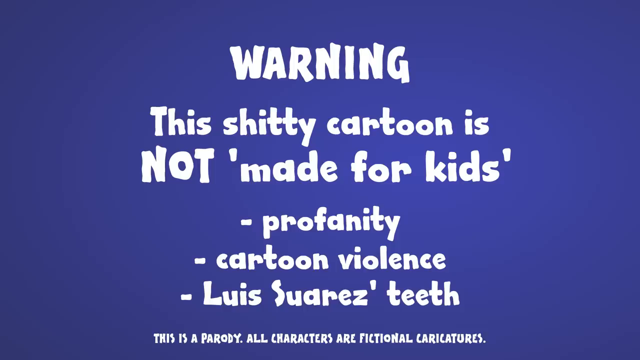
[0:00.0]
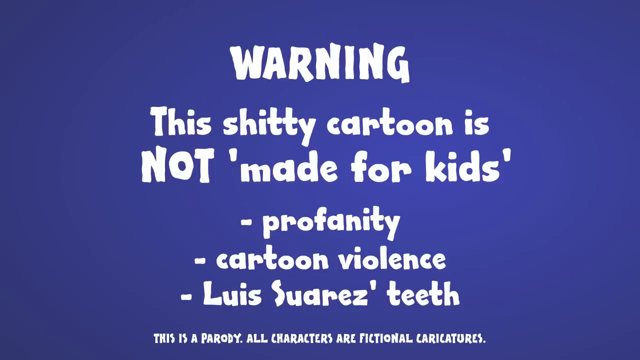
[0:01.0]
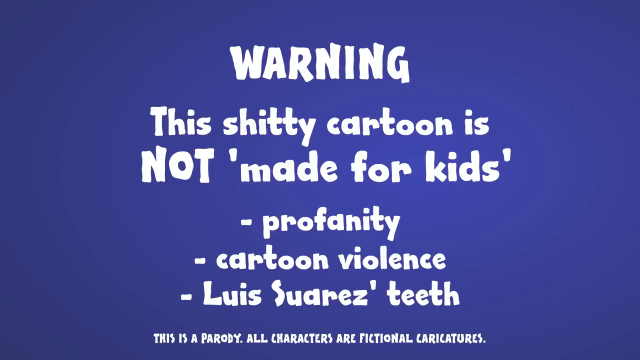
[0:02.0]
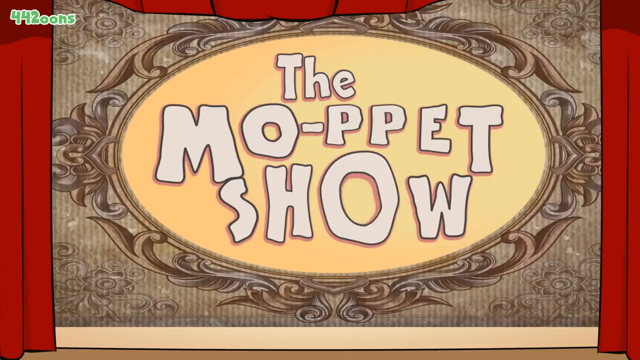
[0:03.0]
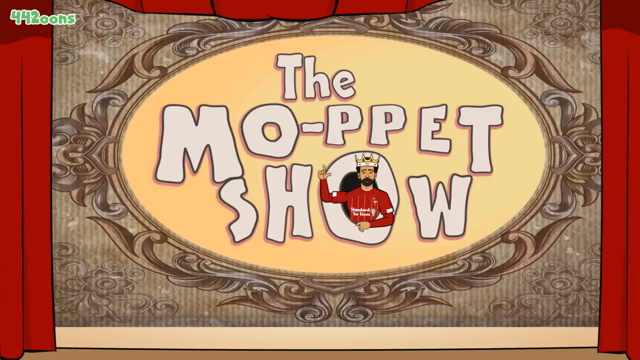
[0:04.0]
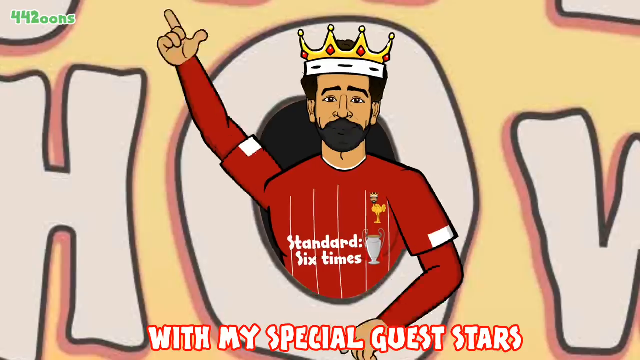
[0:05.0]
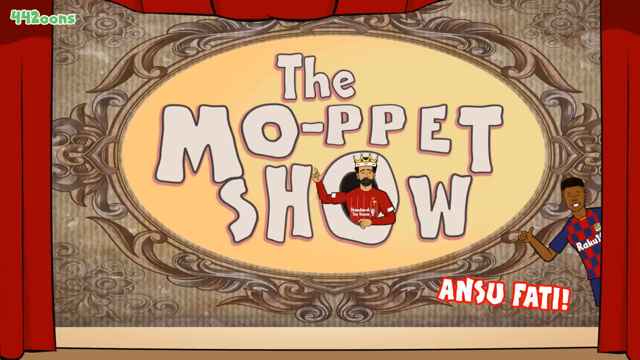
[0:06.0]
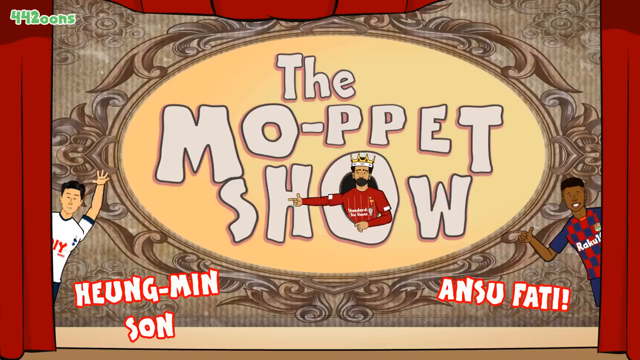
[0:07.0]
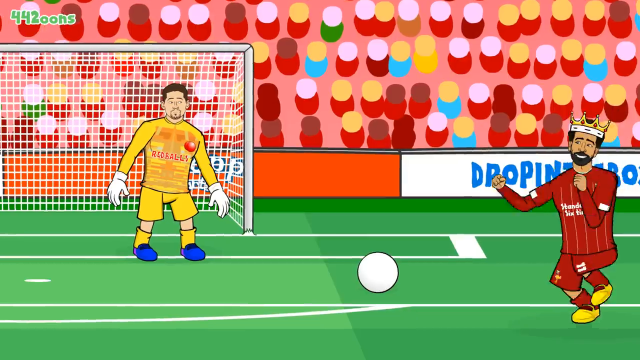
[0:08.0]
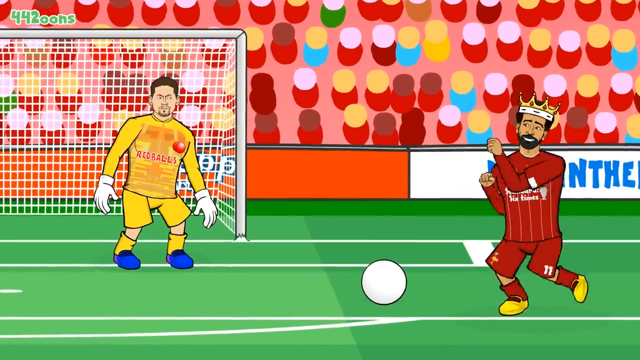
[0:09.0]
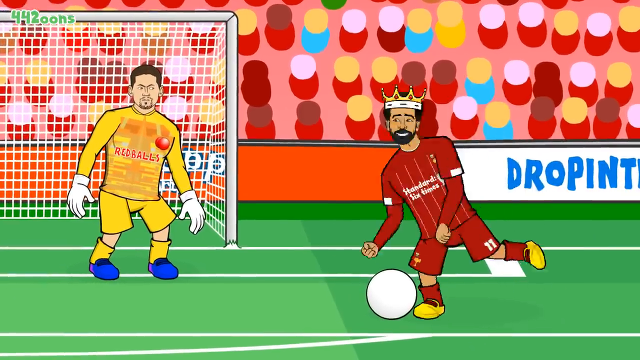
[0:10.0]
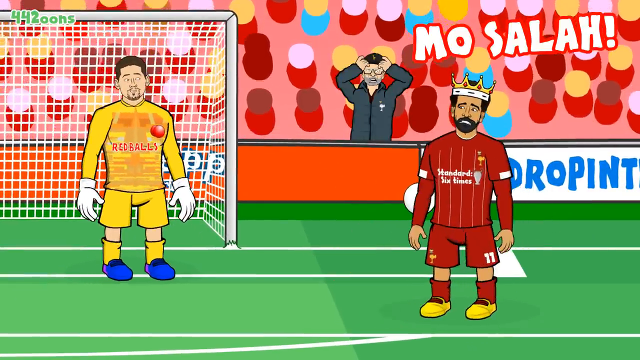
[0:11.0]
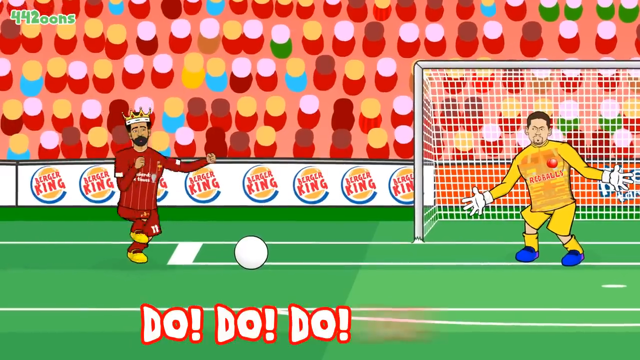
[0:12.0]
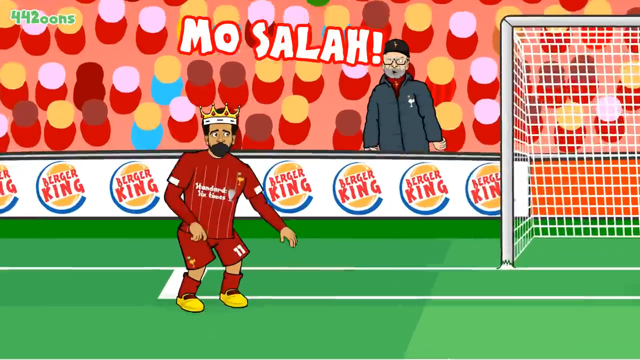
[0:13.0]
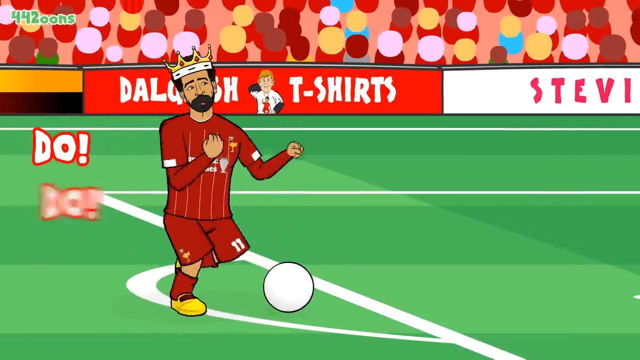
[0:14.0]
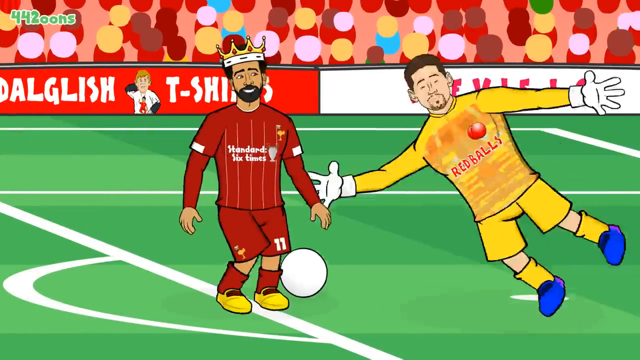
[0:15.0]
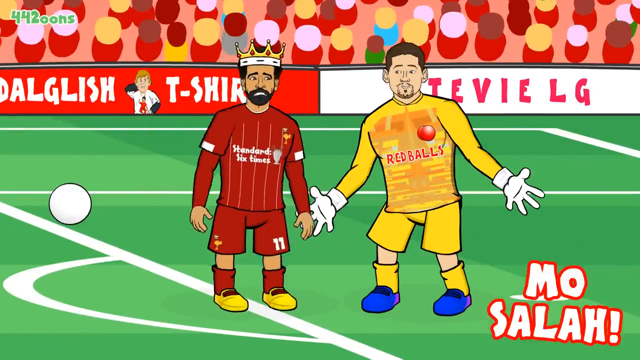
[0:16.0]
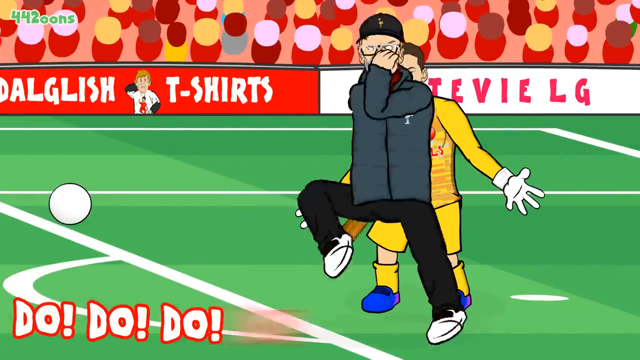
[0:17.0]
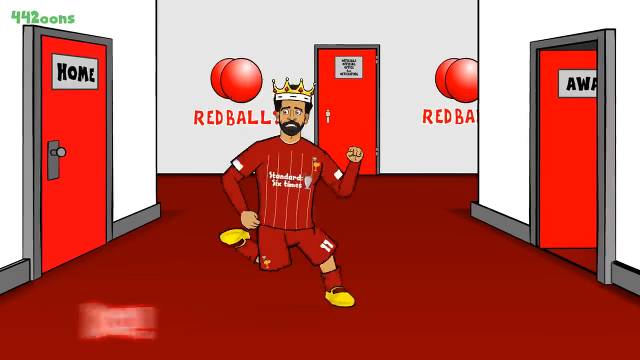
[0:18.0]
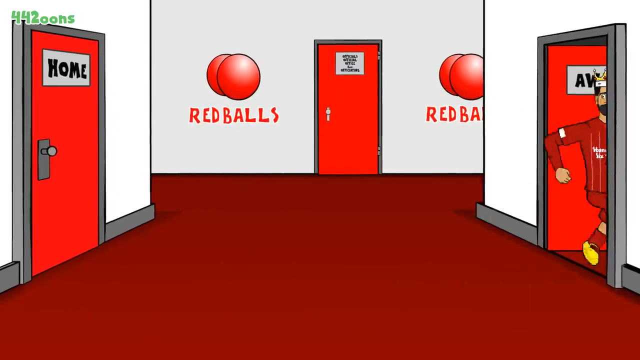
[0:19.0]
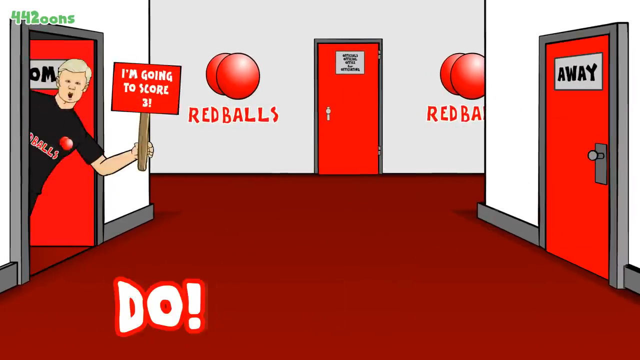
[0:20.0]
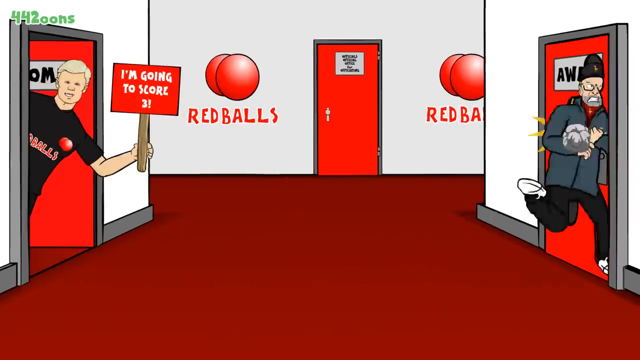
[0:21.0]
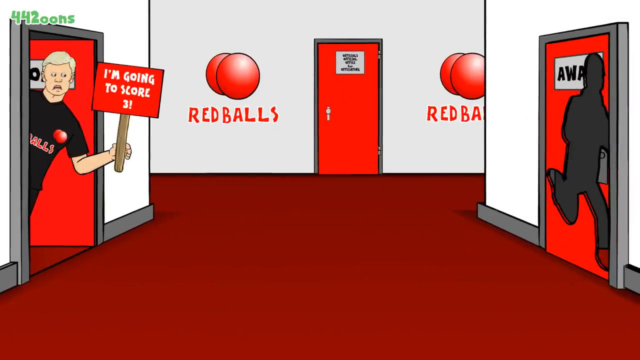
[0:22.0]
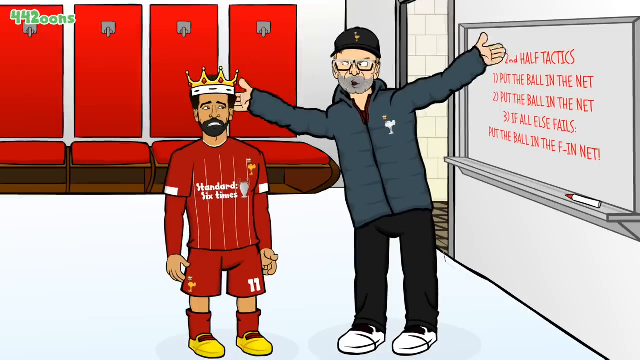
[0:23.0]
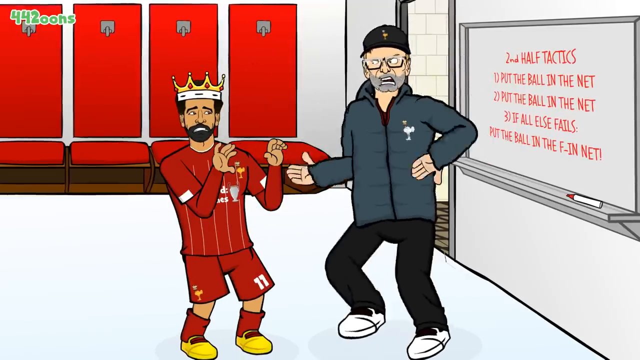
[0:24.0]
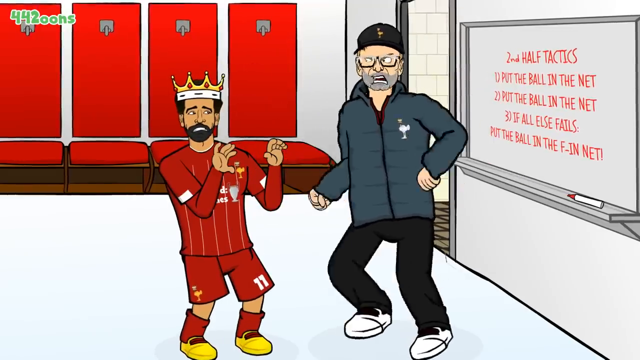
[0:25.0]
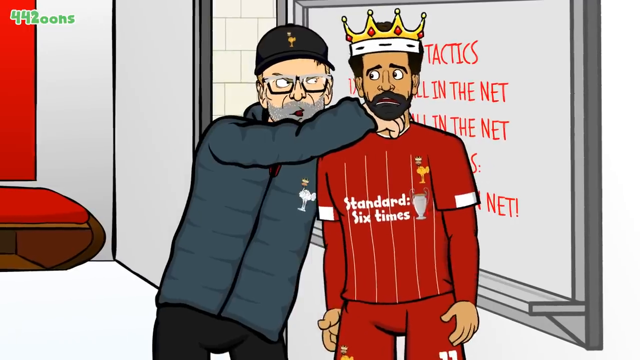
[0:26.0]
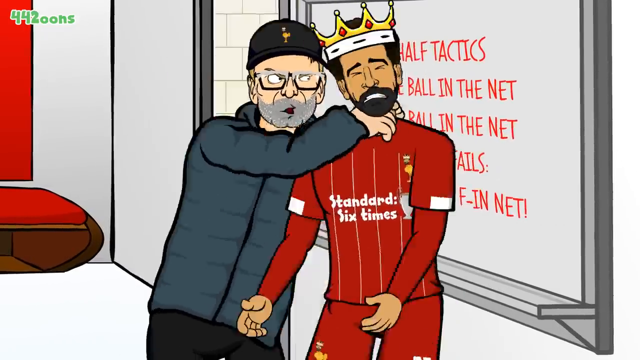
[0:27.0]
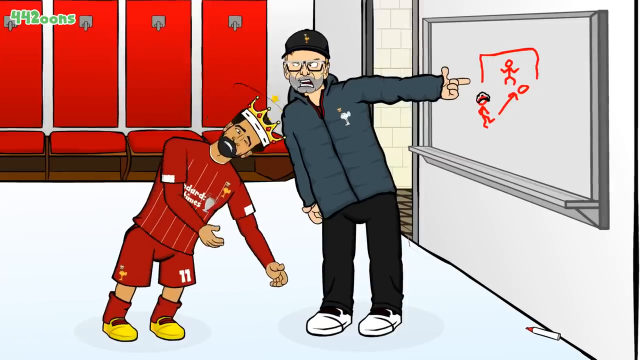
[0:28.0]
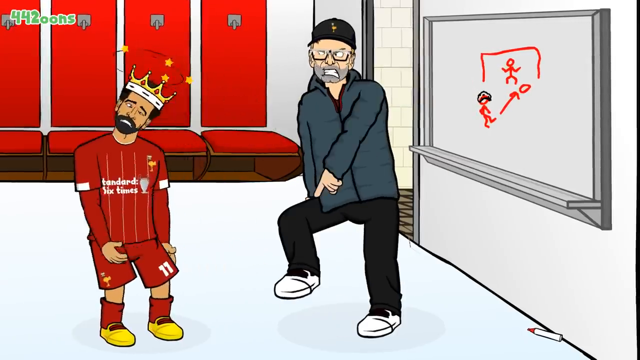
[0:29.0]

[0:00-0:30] A warning message is displayed on a blue background, warning that the television program is not suitable for children or for anyone not over the age of 18 because it contains profanity, cartoon violence, and something else inappropriate for kids. The video cuts to a title screen reading "The Mo-pped Show." A cartoon character wearing a red soccer jersey and a golden crown on his head is hanging outside the letter O. The screen then cuts to the crowned character doing silly, rule-breaking things on a soccer field, and he runs away from security for his actions. He keeps running until he is caught inside a locker room.